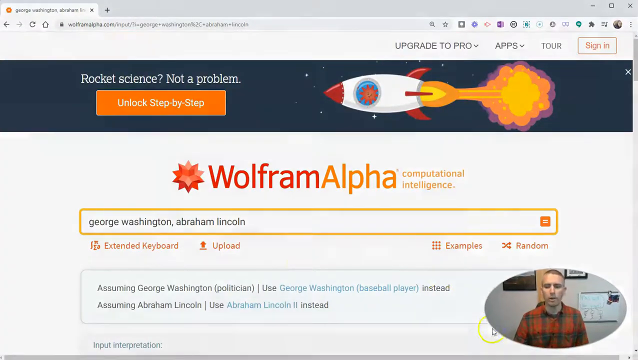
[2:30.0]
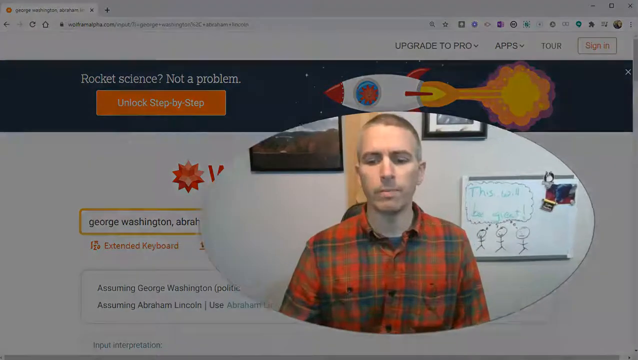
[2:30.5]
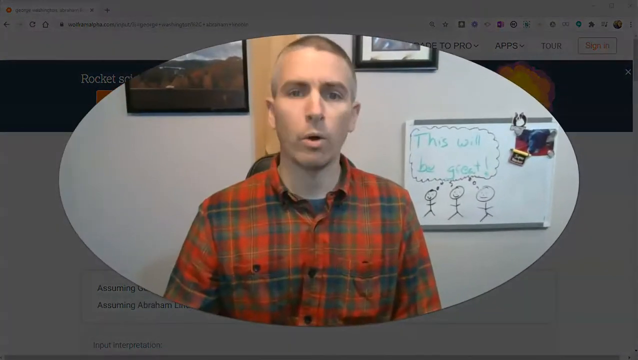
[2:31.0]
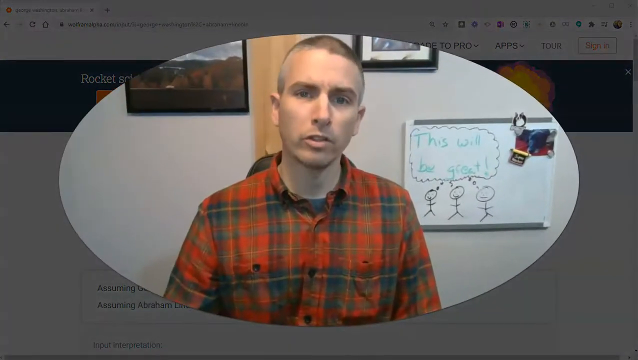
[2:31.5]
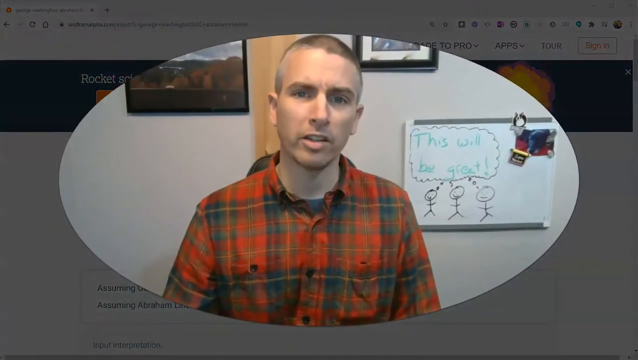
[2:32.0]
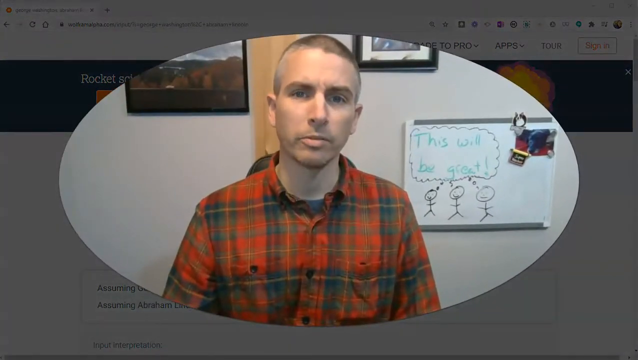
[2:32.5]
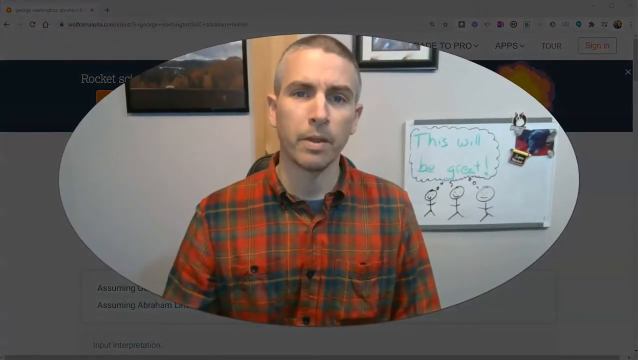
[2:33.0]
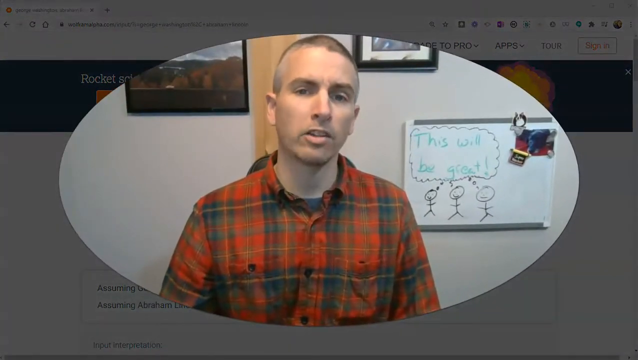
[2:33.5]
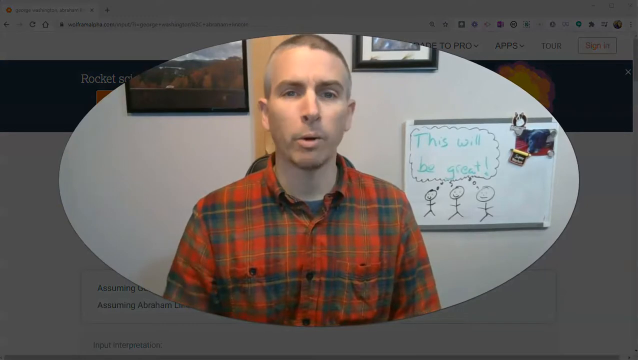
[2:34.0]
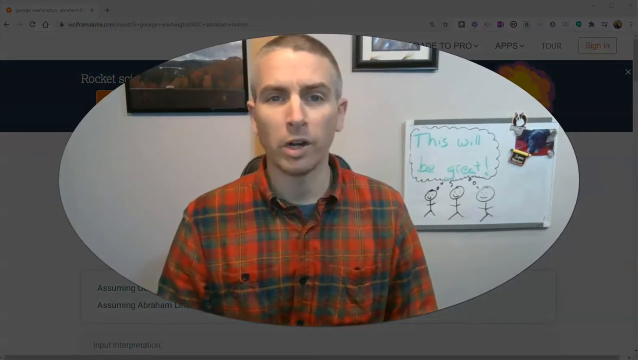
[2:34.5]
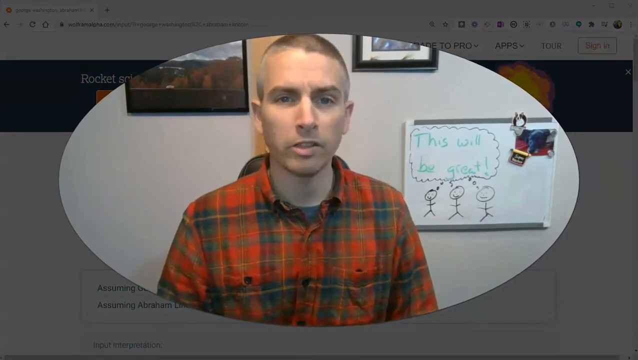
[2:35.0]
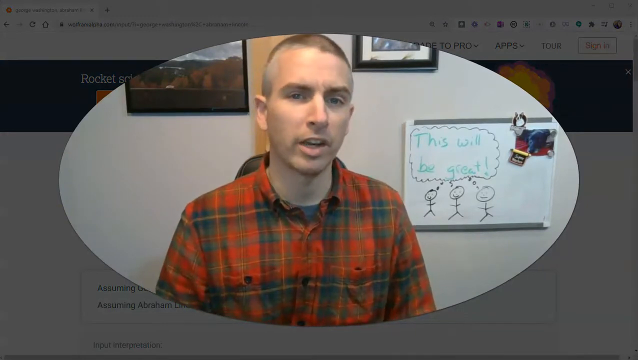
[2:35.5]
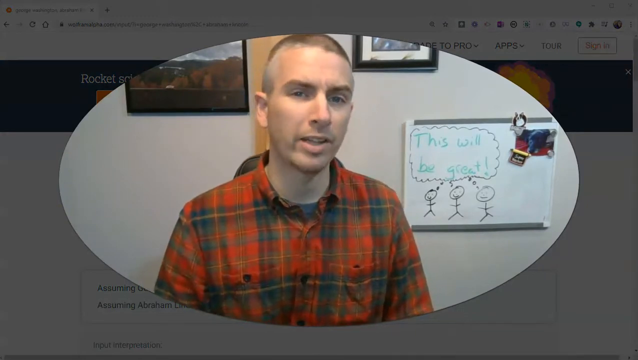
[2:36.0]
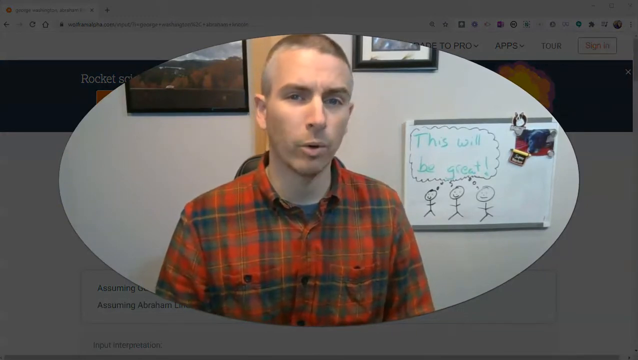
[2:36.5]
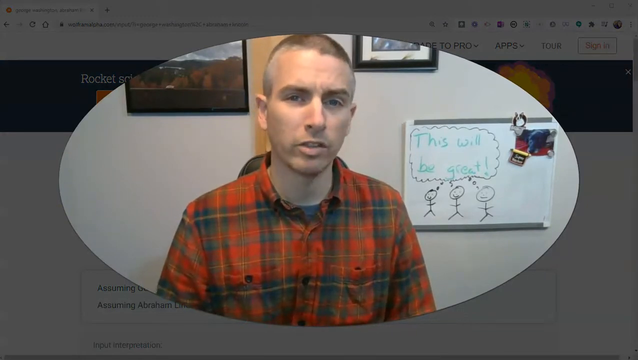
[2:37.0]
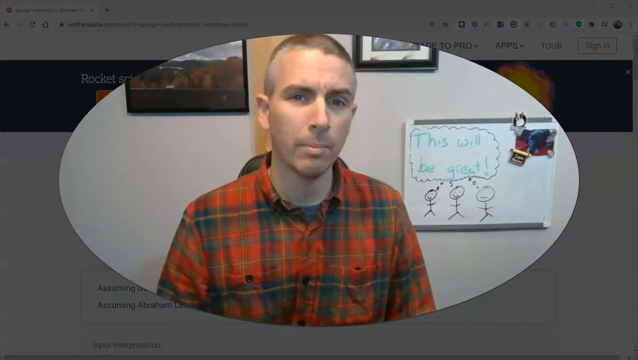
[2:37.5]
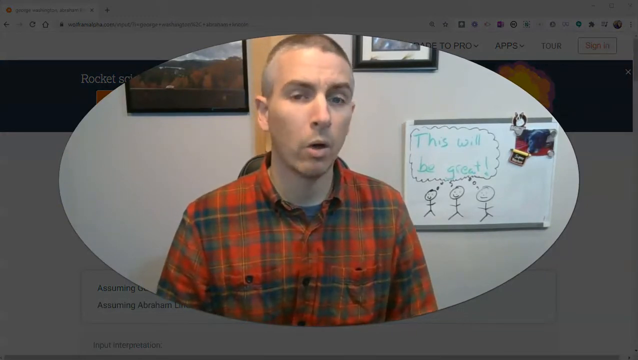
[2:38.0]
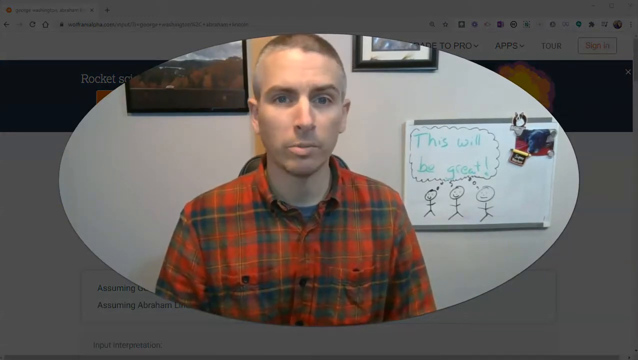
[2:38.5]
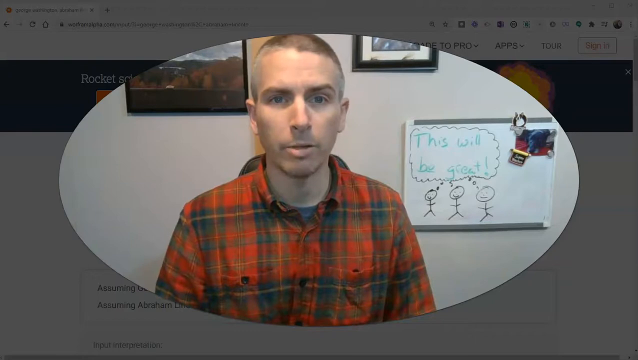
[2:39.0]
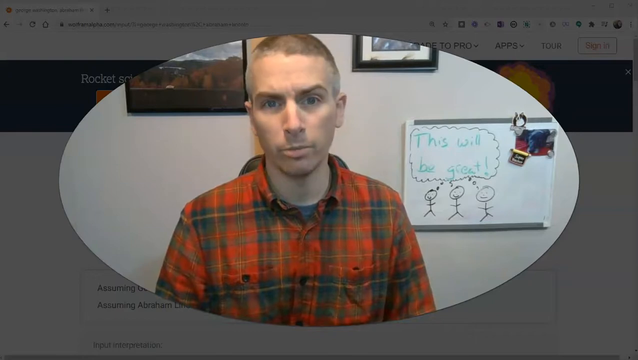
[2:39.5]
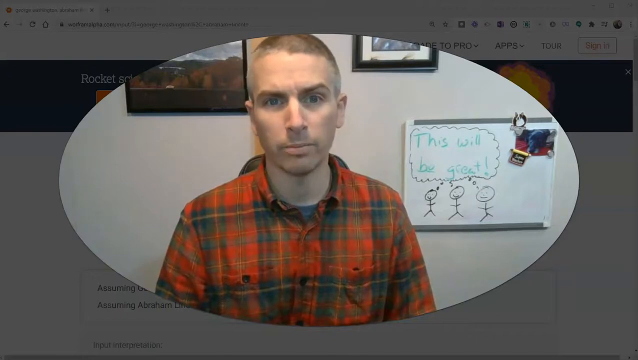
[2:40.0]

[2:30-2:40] The user scrolls back up to the top of the Wolfram Alpha website, where the George Washington and Abraham Lincoln comparison search was made. They move the mouse pointer to the bottom right corner of the screen and click their video, making it larger, and they are shown talking on camera. The person wears a mainly red plaid shirt and has short hair. Behind them on the wall is a whiteboard with a word bubble above three stick figures reading "This will be great", and some magnets are stuck to the upper right corner of the whiteboard.